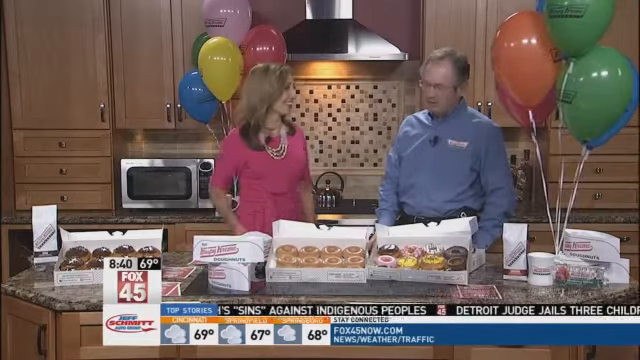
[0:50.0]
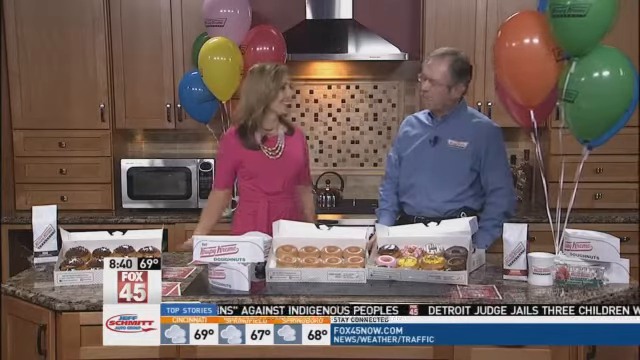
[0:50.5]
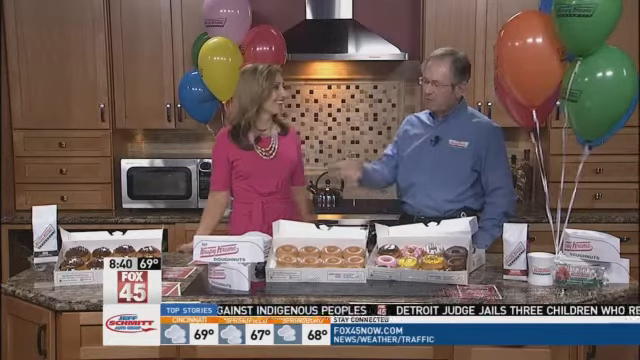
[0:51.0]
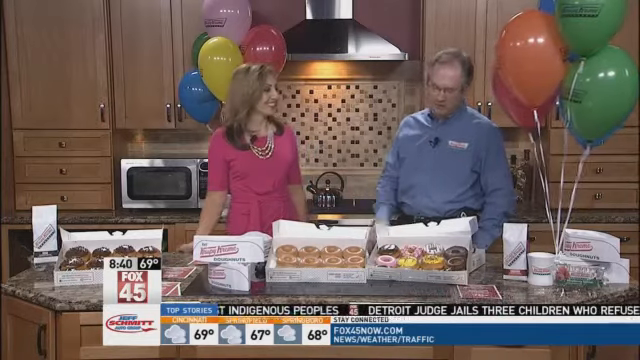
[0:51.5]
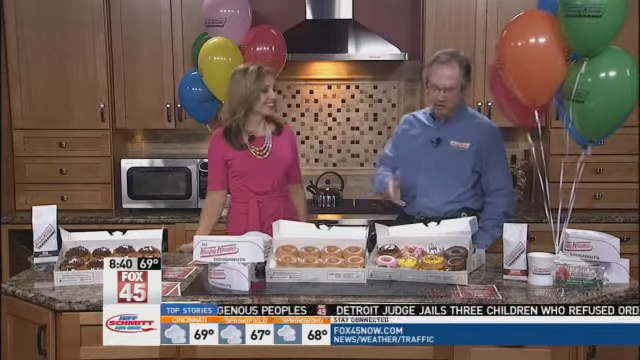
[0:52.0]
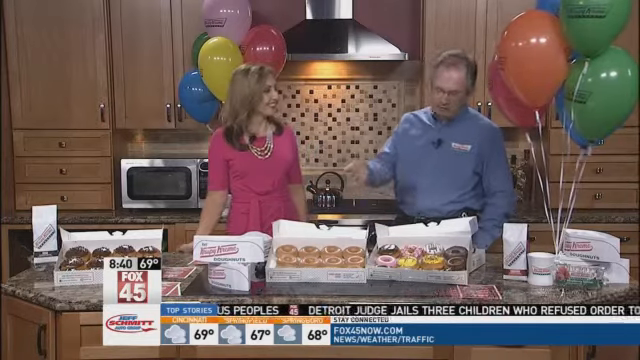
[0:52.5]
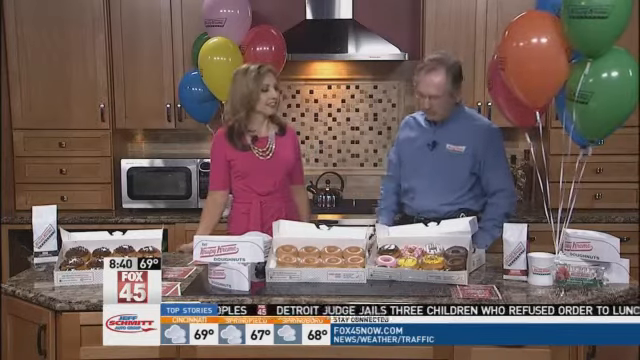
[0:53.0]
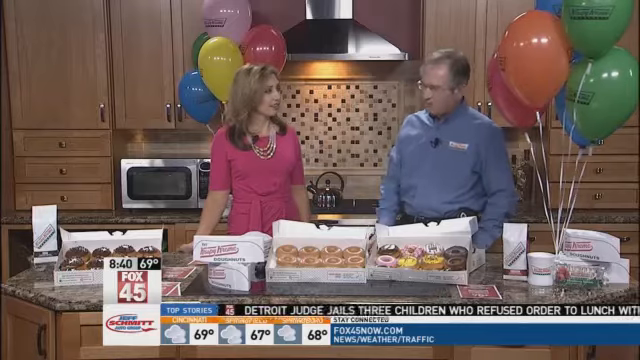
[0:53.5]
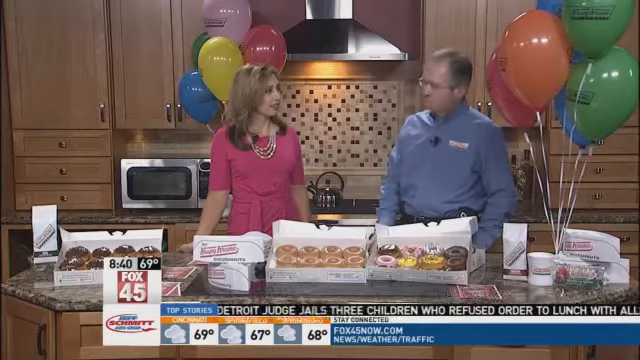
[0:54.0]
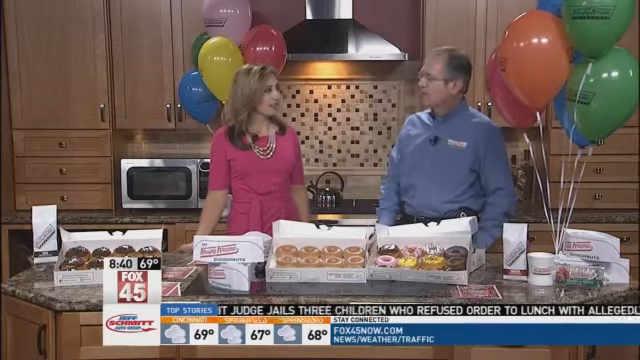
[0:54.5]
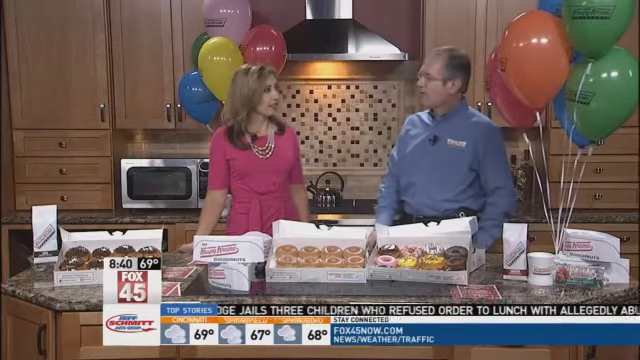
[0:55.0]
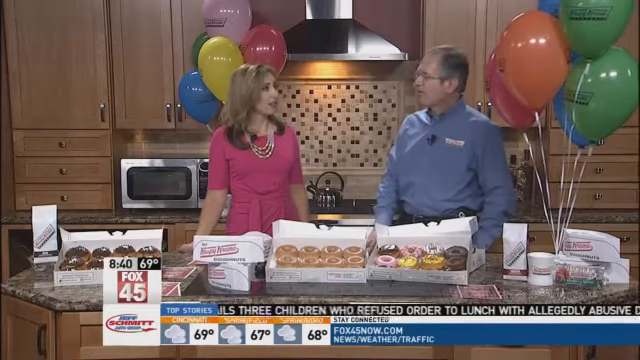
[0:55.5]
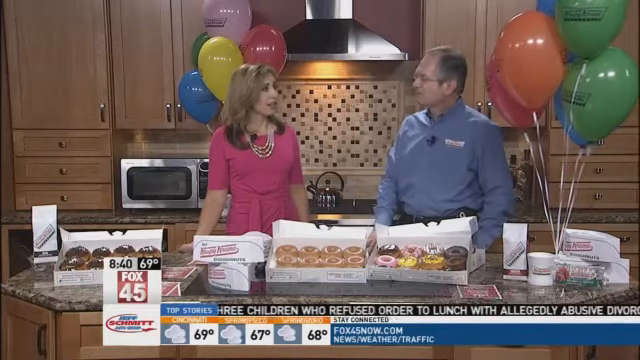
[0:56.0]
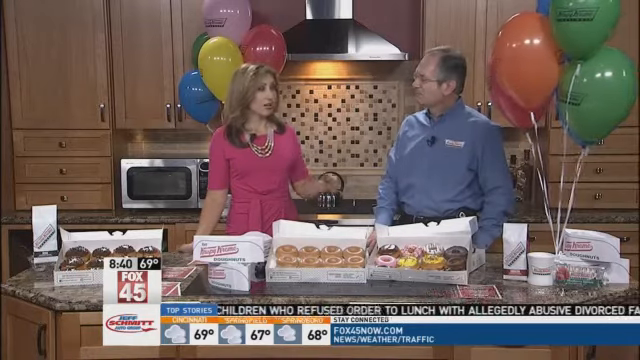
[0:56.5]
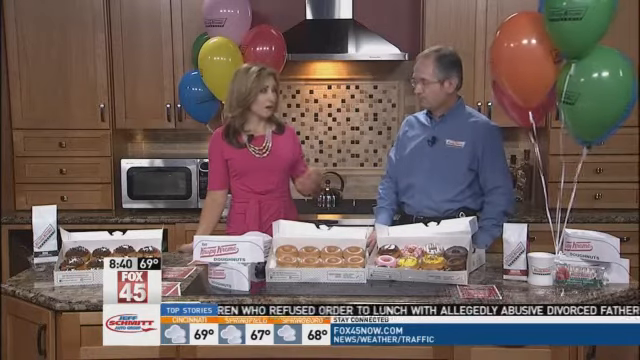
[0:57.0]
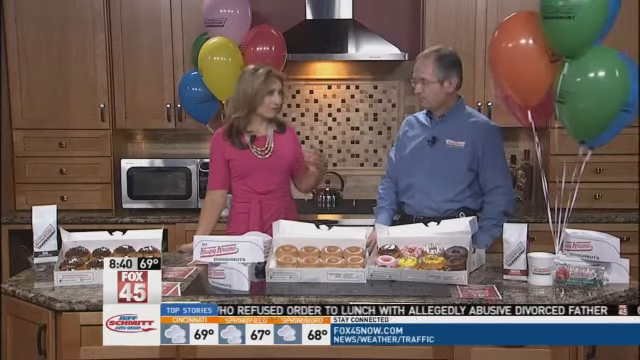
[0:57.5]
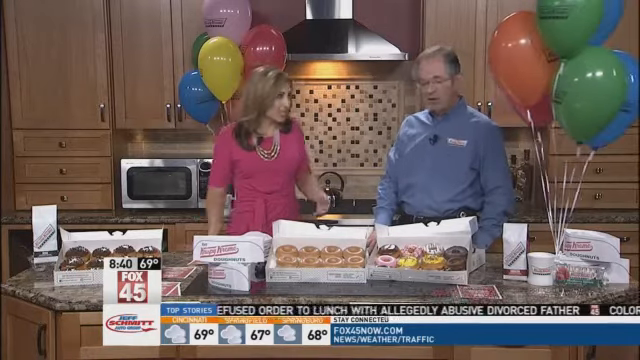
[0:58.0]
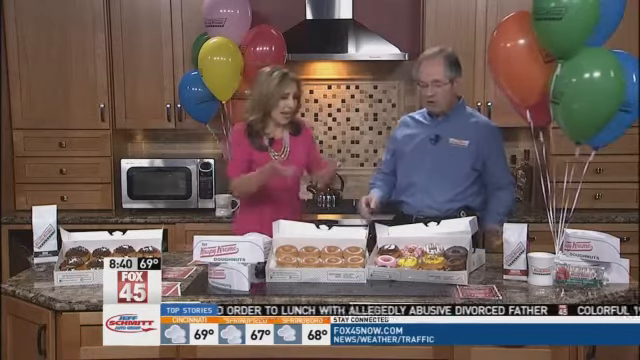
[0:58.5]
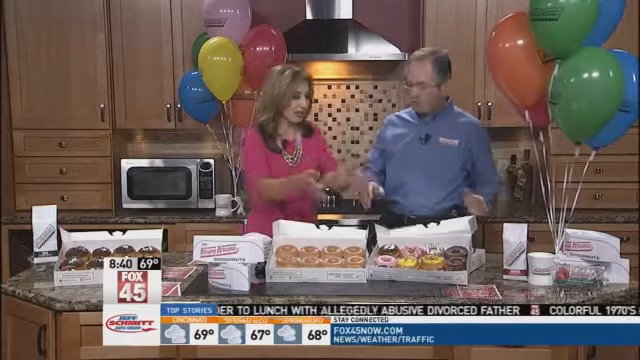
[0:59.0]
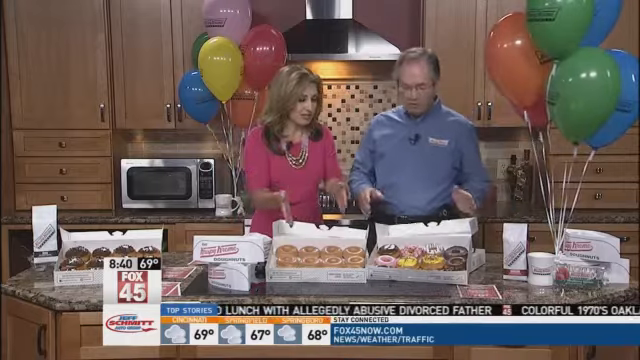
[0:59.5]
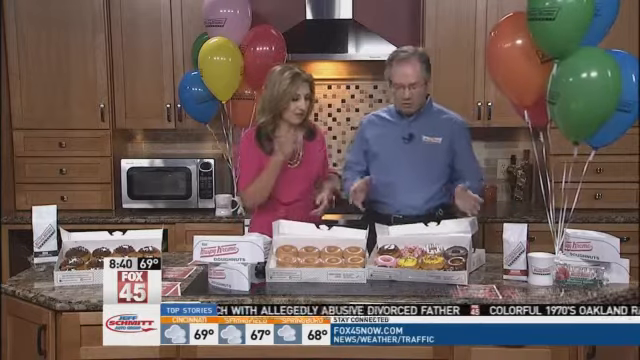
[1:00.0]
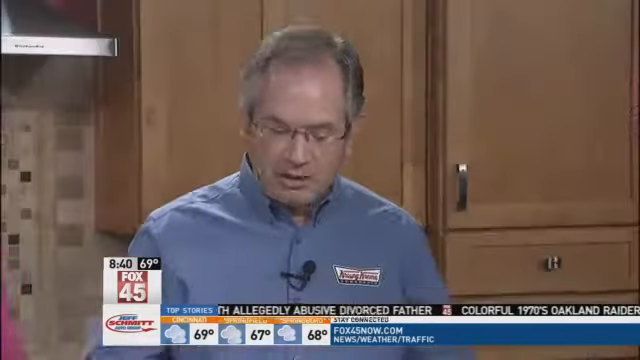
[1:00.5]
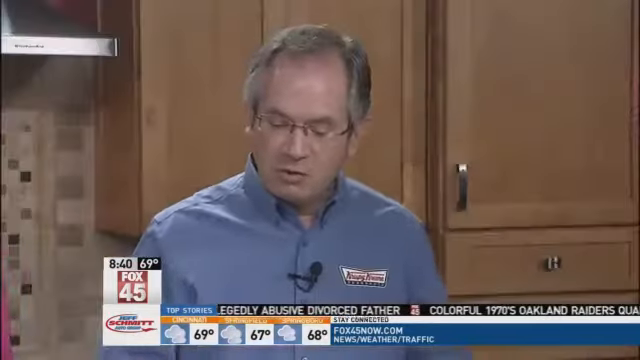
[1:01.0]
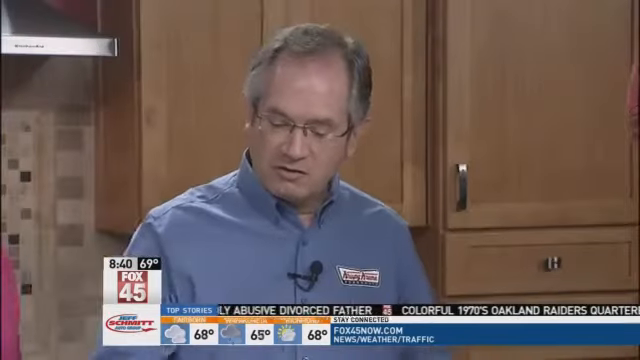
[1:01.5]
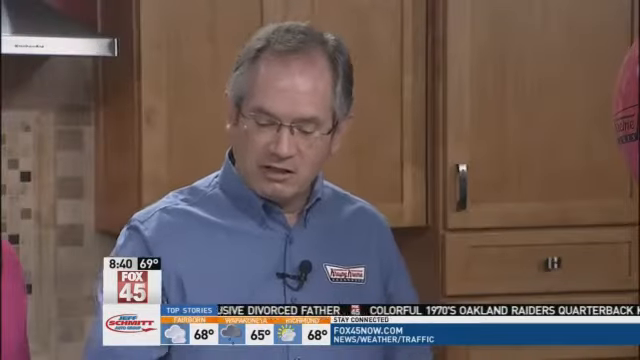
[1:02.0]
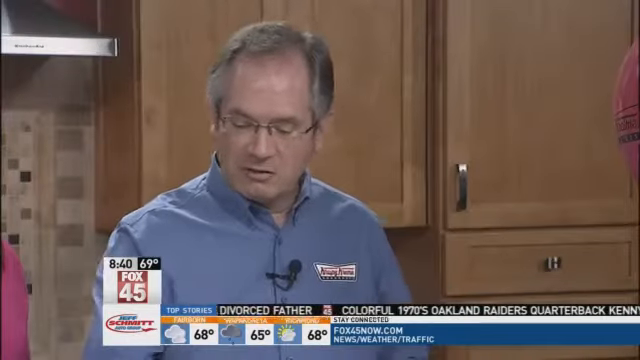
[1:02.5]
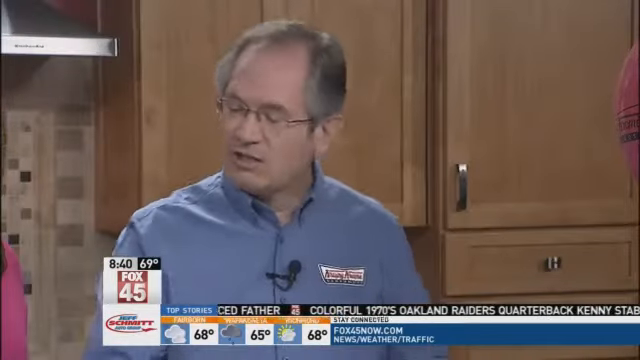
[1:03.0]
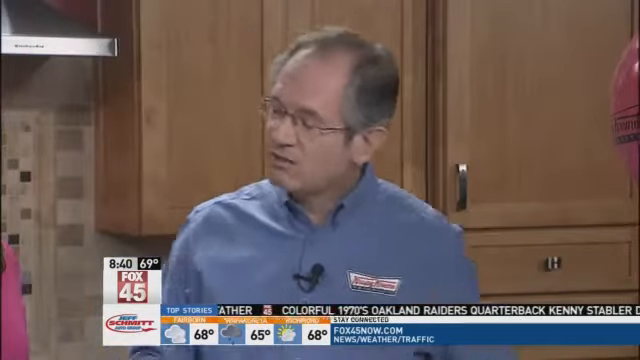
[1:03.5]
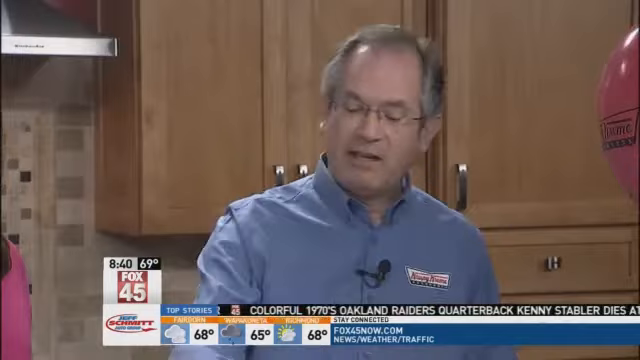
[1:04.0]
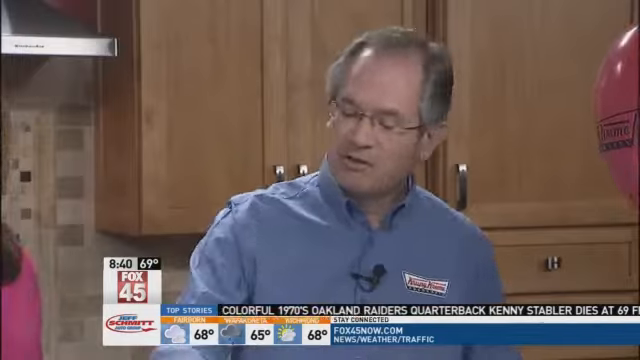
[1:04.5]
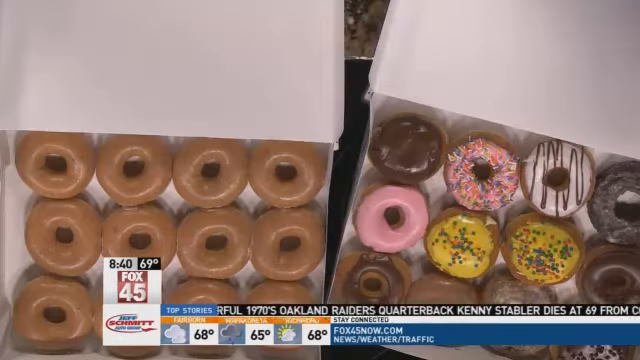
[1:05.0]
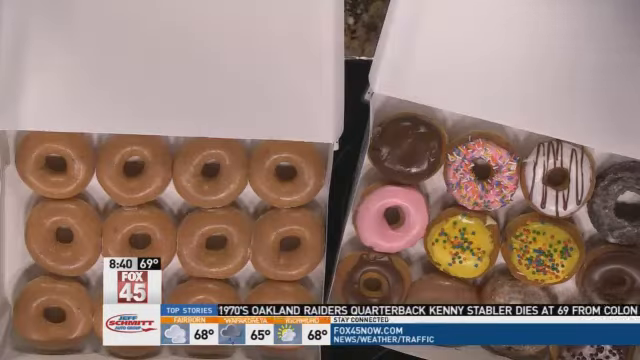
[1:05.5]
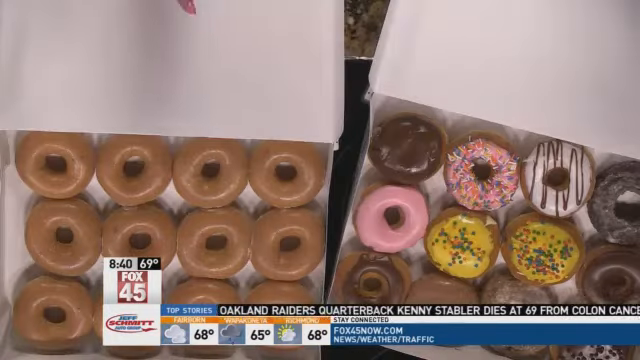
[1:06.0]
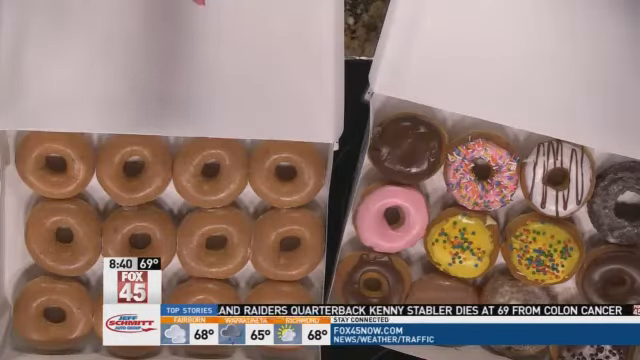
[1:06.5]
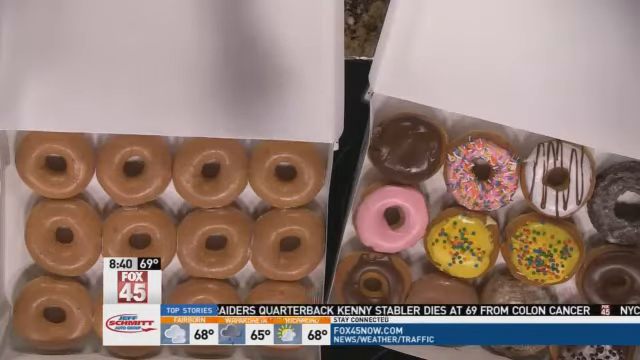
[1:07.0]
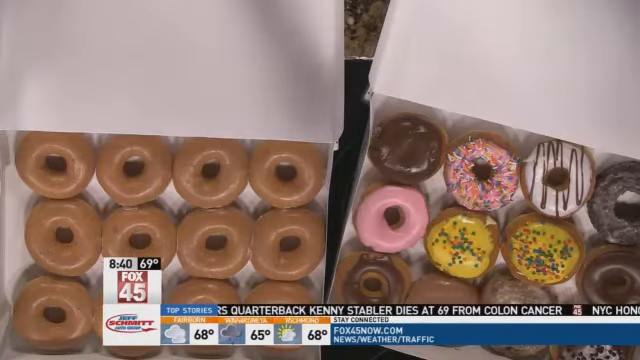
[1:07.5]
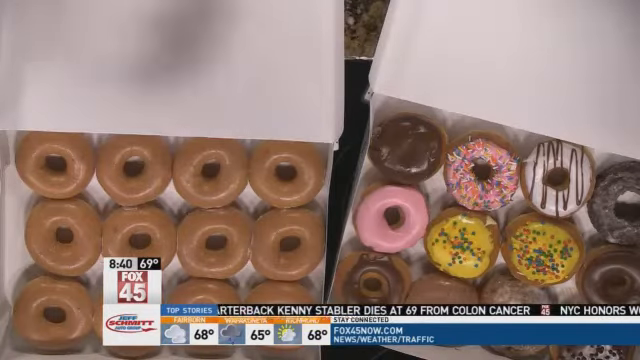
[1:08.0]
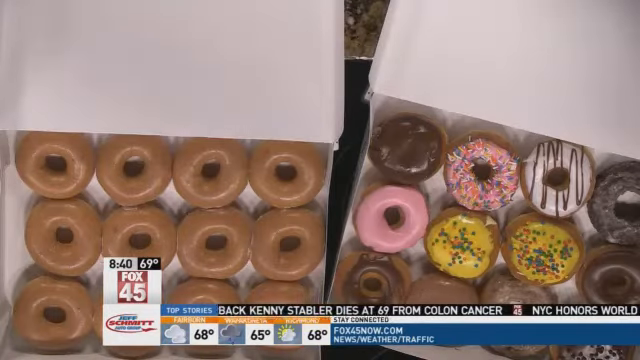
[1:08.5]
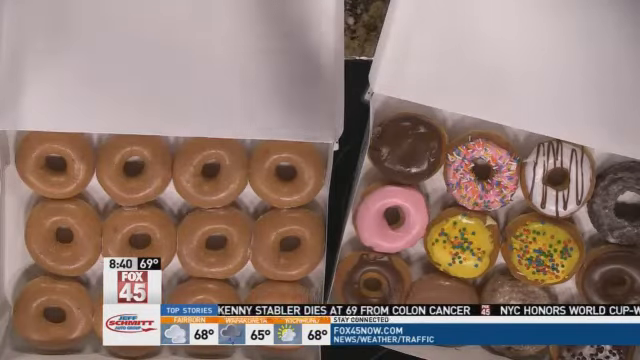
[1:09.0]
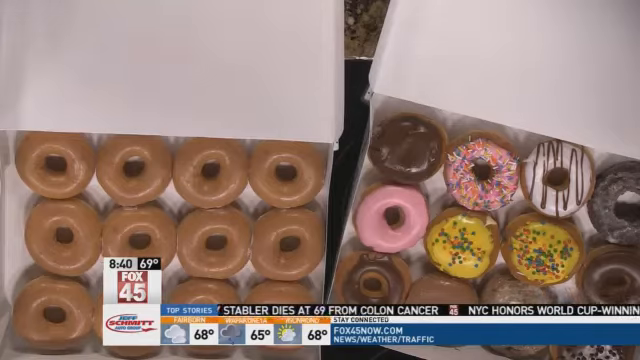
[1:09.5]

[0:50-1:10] Timothy from Krispy Kreme Donuts gestures a little more expansively, still talking in a kind of non-emoting way, though he looks like he might be getting a little more comfortable in front of the camera. She makes kind of funny hand gestures, holding her hands parallel to each other with her neck hunched as she points to the different donuts. He responds, talking to her, his body still moving stiffly, with his neck and shoulders moving in the same direction. A close-up of the donuts follows: some look like plain glazed, others are glazed with chocolate, and some look cream-filled, with yellow glaze and pink glaze, an assortment of donuts in boxes that look like they hold 12 each.